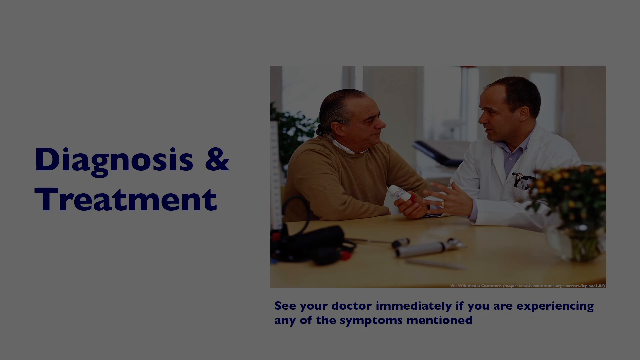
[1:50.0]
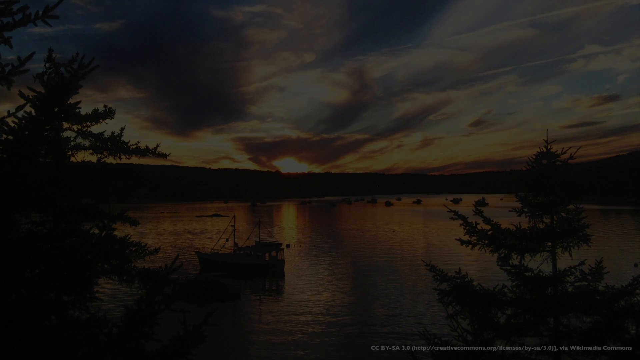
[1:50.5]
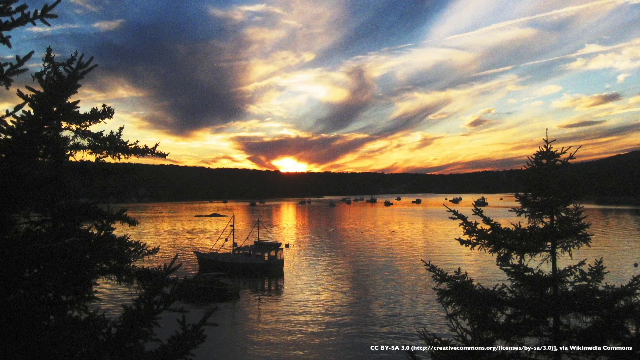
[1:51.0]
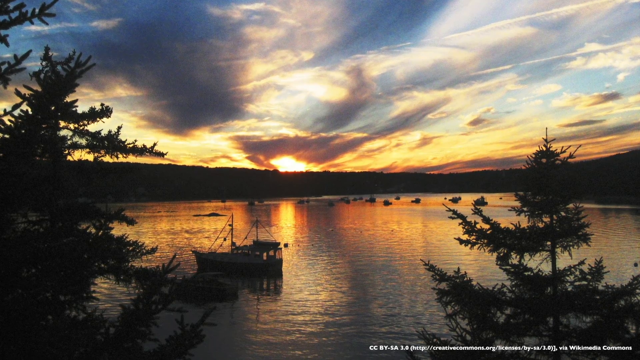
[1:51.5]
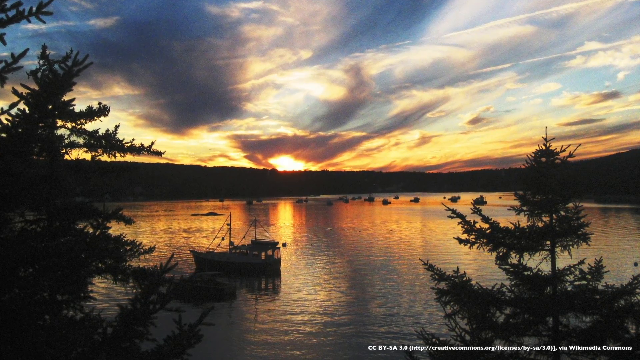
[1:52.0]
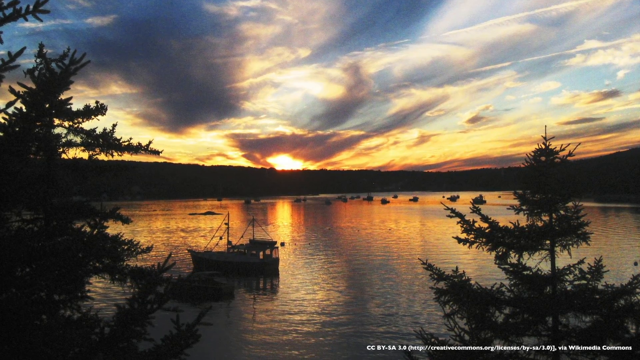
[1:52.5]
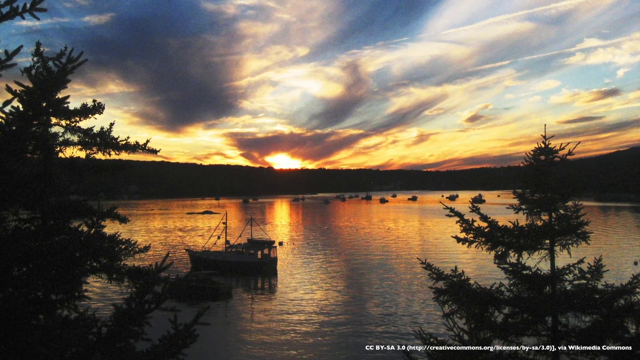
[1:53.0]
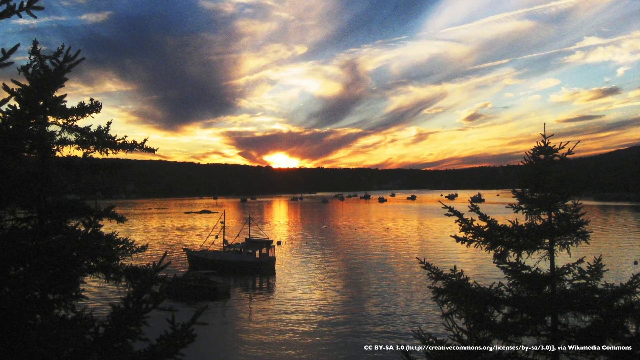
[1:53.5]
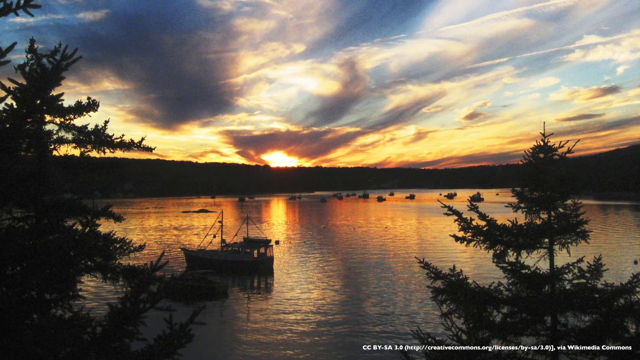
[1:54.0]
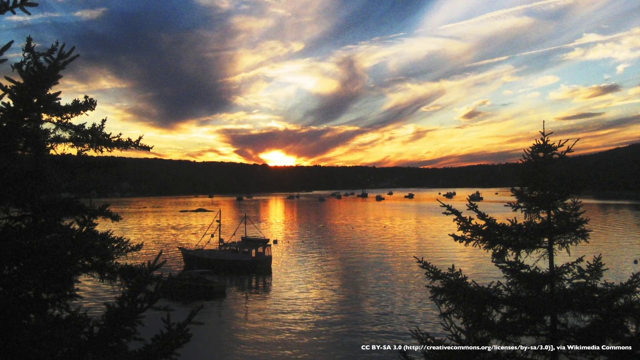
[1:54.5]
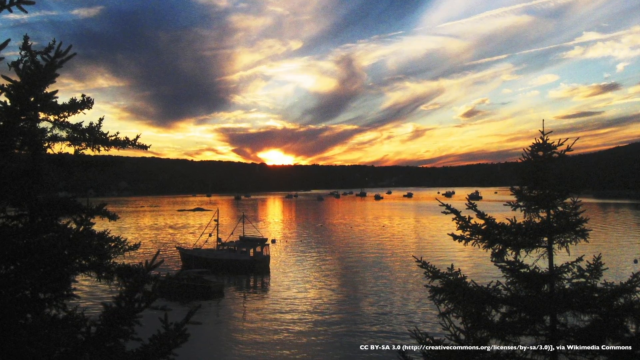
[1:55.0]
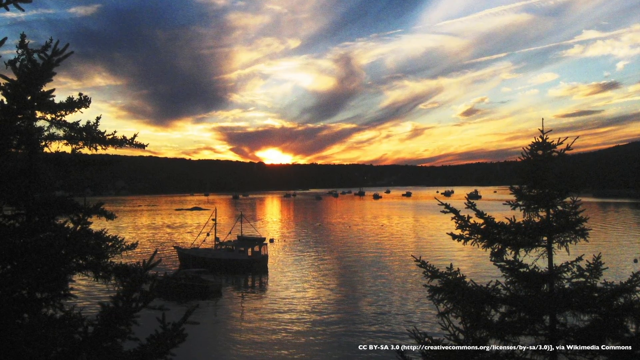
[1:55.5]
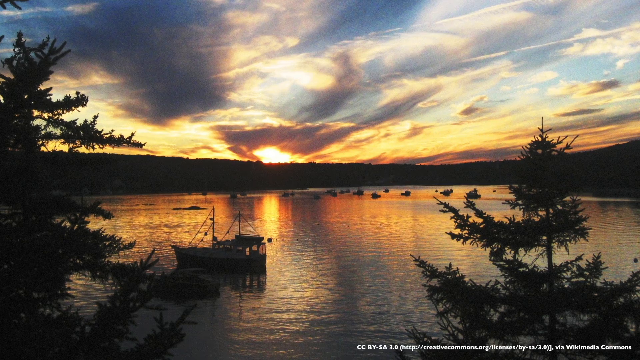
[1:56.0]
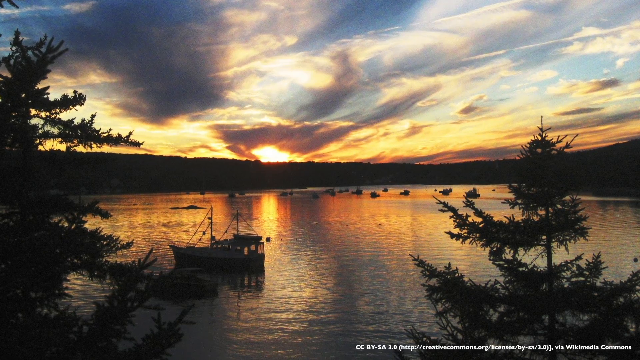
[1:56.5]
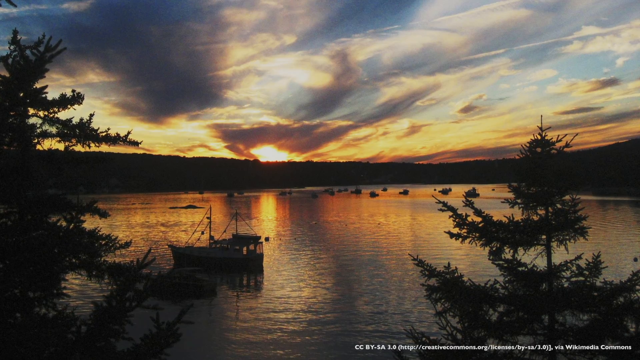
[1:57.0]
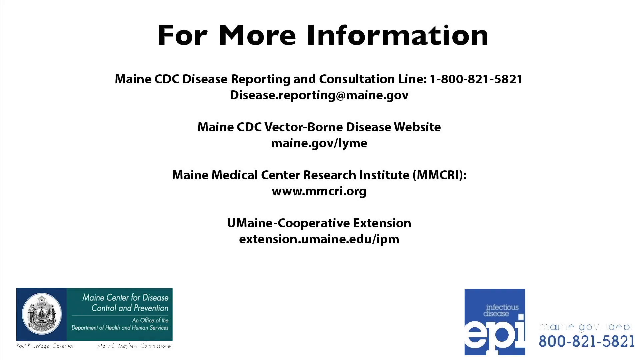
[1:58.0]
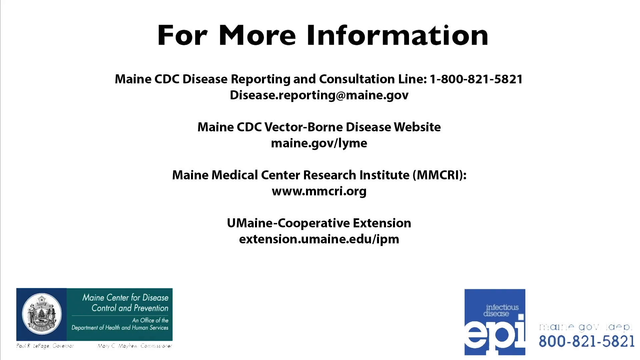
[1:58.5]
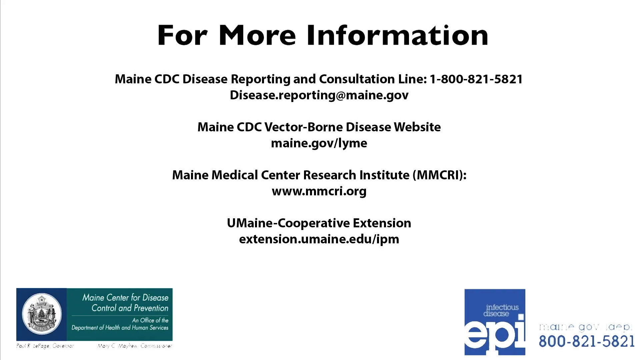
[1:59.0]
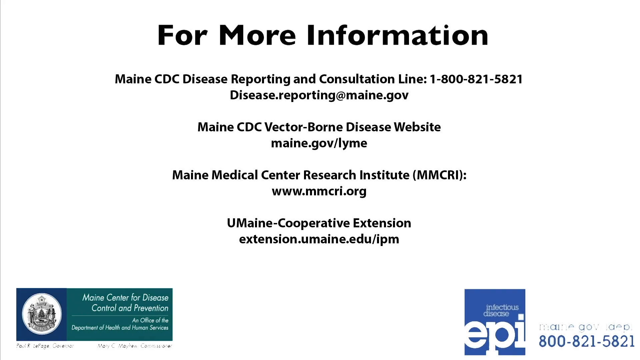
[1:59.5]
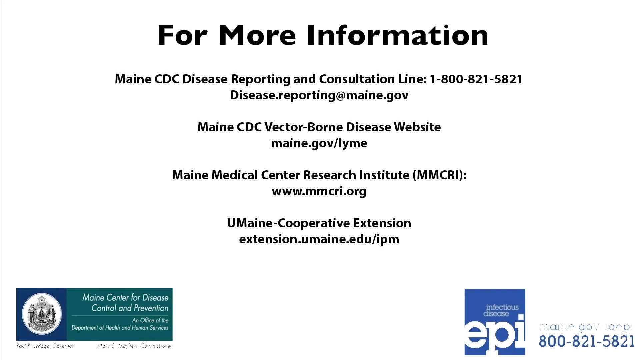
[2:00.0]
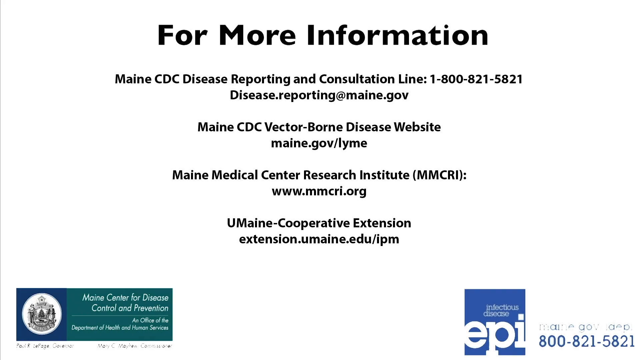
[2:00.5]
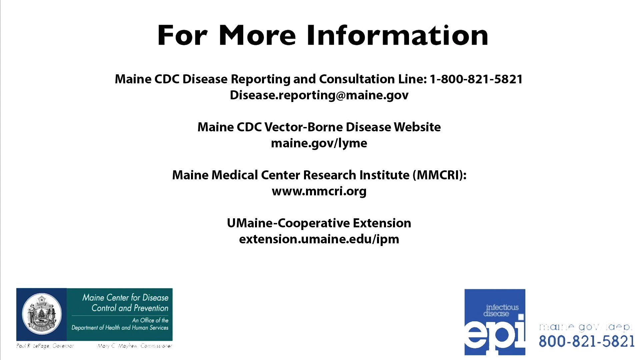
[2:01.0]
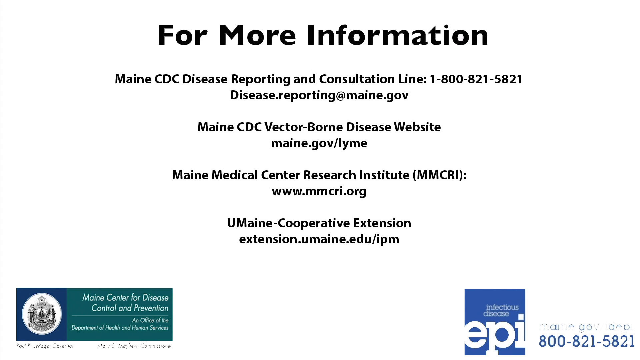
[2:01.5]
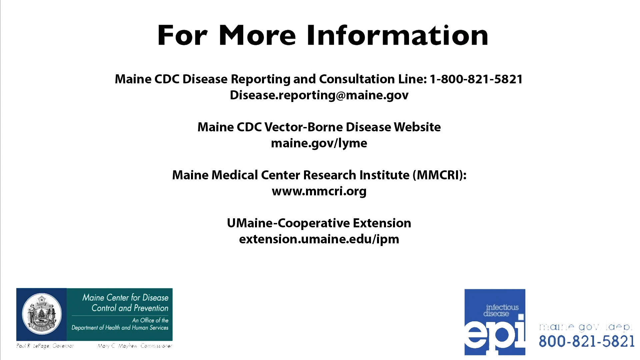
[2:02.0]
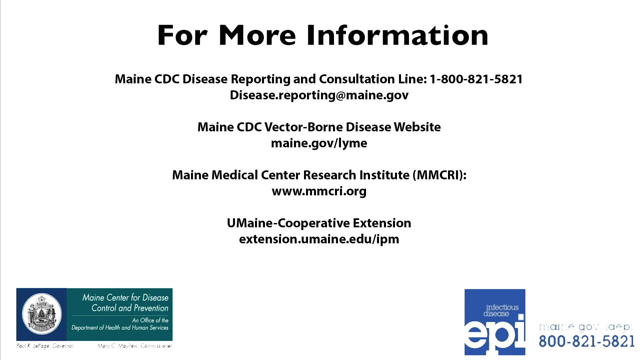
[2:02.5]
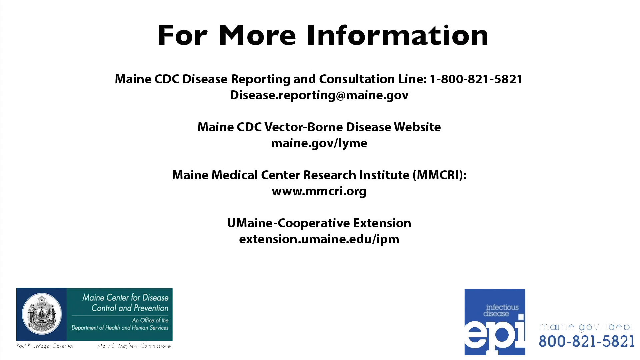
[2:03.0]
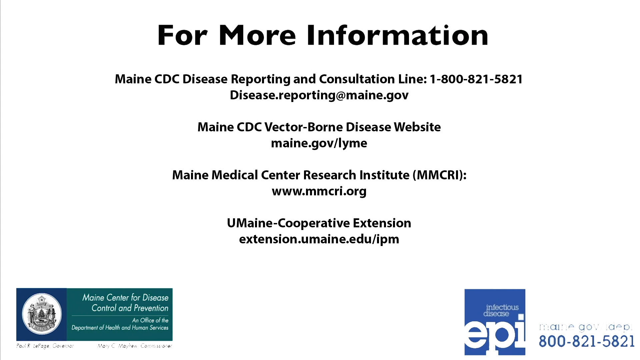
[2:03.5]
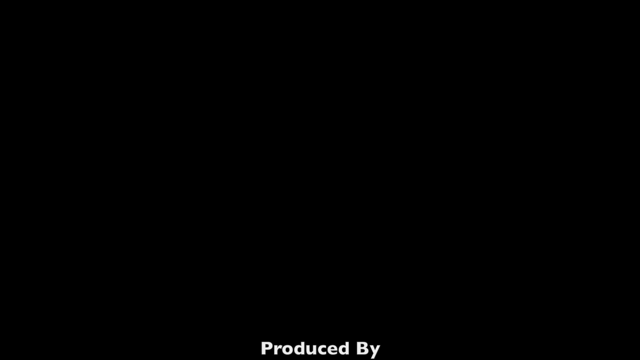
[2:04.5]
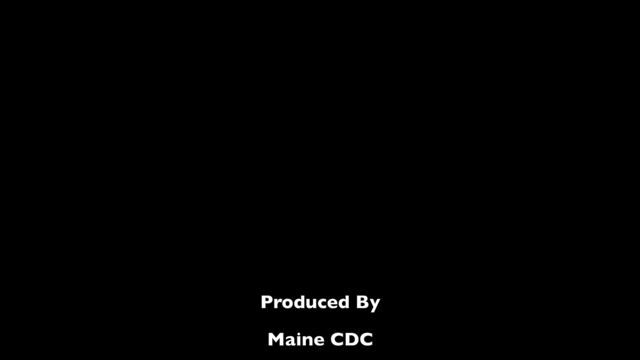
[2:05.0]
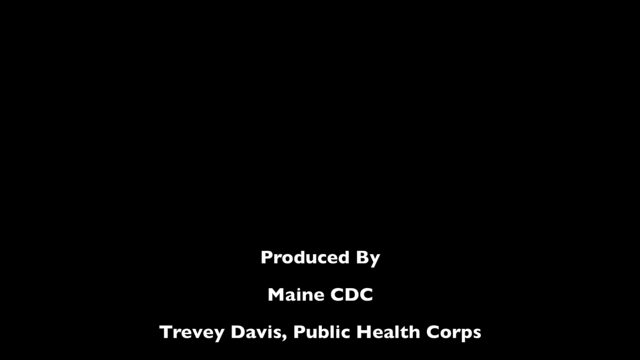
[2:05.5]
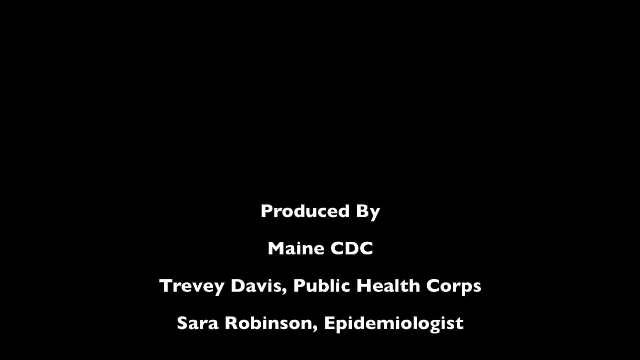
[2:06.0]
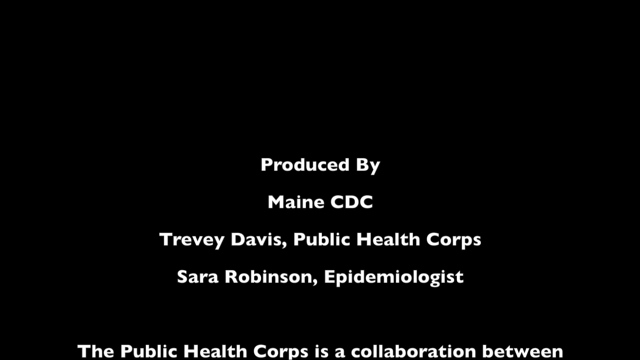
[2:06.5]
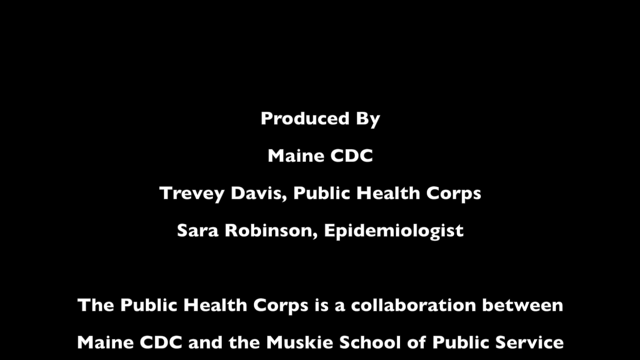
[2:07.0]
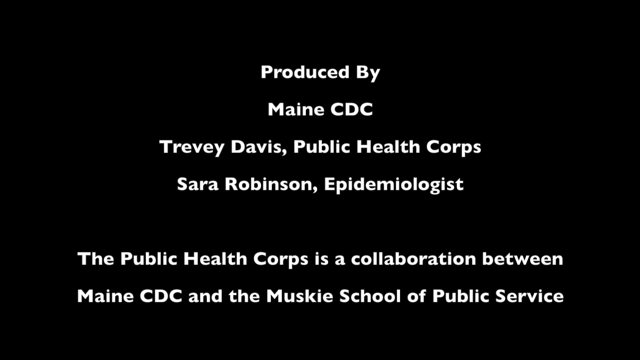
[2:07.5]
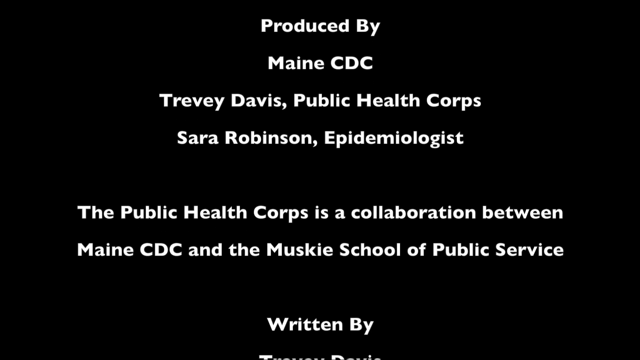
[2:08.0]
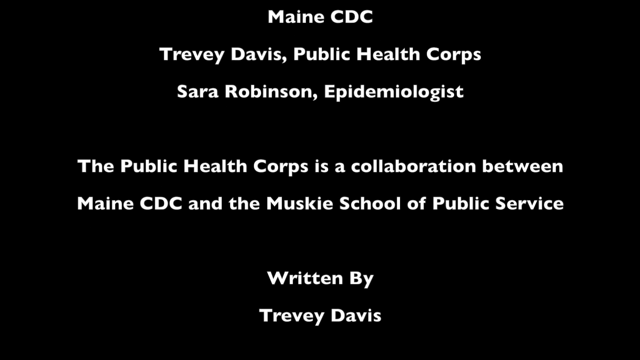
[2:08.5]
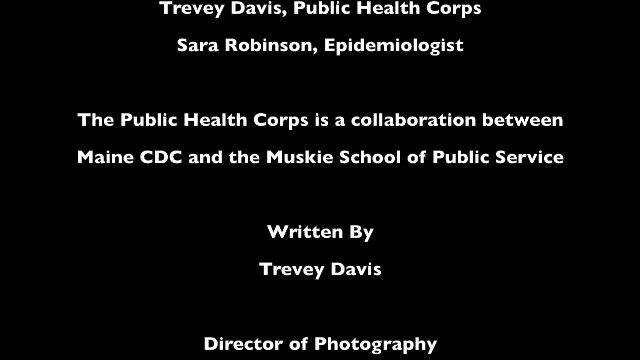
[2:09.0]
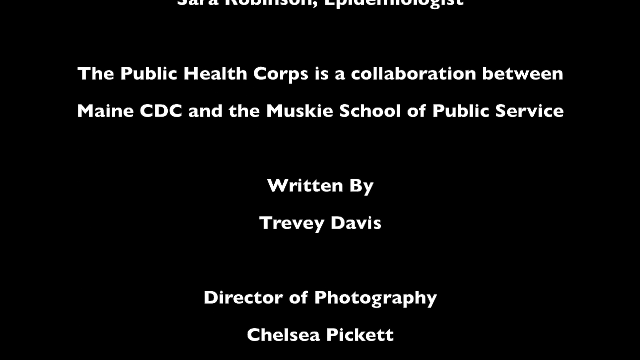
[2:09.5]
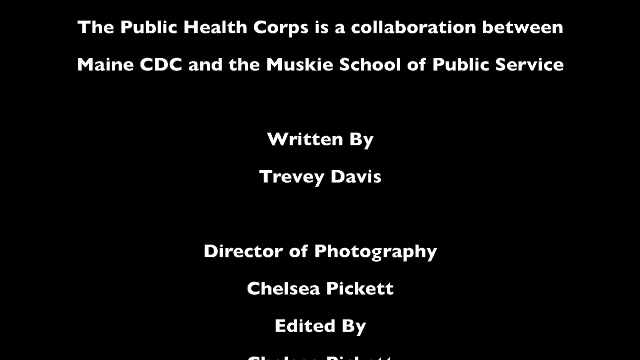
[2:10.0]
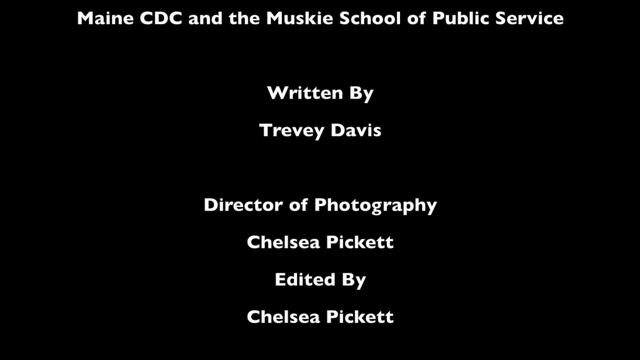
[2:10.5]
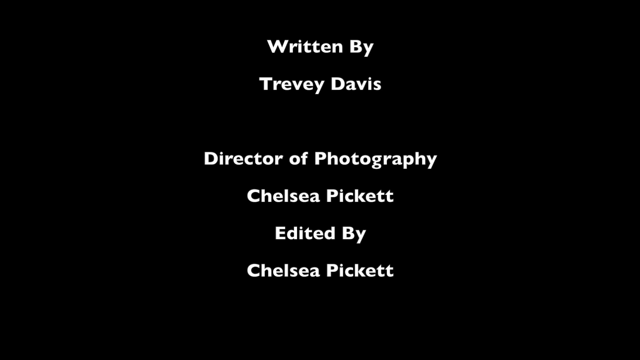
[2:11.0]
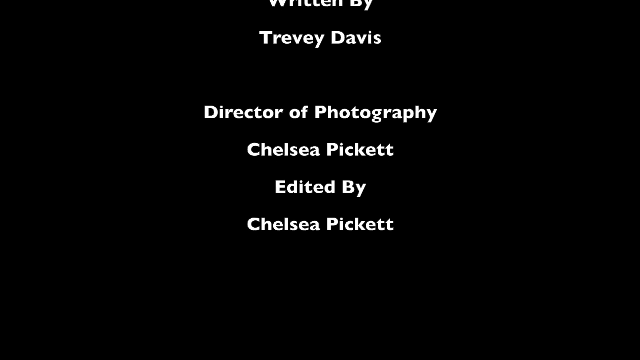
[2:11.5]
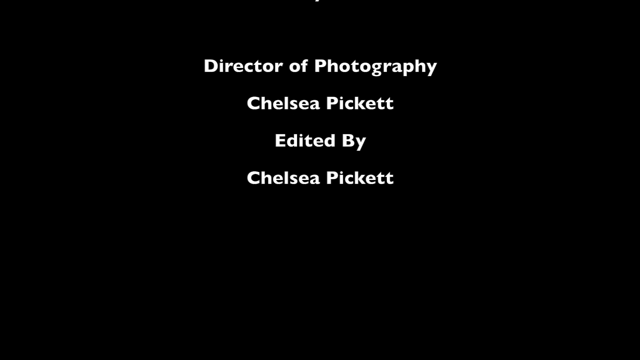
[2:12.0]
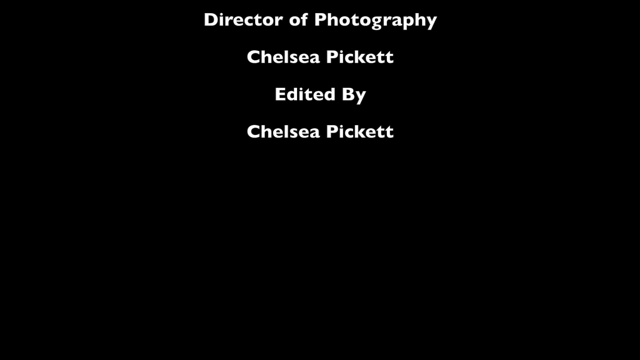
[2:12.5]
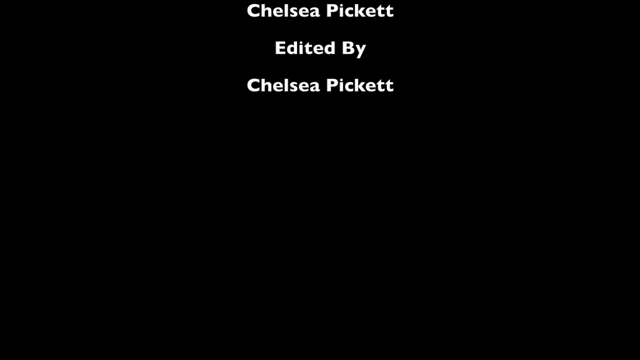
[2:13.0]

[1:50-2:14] An image shows a sunset over a body of water, with an overall dark, dimly lit feel. The sunset is a mix of grey, a little purple, yellow, and hints of orange and blue, reflecting over the water. There is a short tree in the bottom right corner and a larger tree on the left side of the image. There appears to be a boat about 20 feet out into the water. The camera slowly zooms in on the image before the closing screen appears: a white screen that says "for more information, Maine CDC disease reporting consultation line," with a phone number, an email address and three more related medical websites. Two labels appear on this screen, just like at the beginning of the video. It is followed by a black screen with ending credits in white text, and then the video ends.